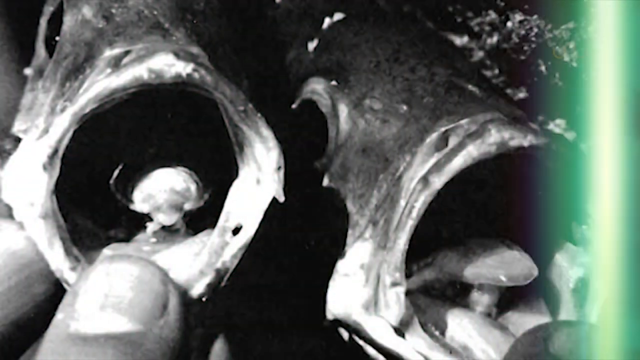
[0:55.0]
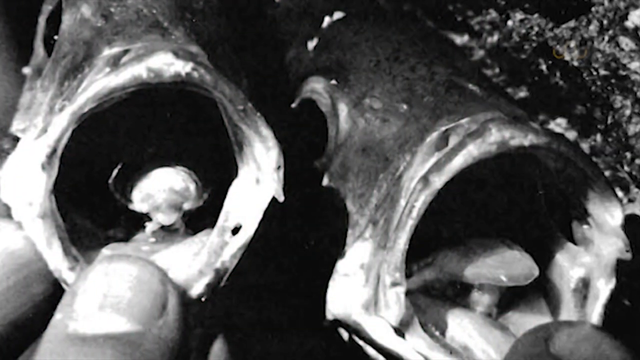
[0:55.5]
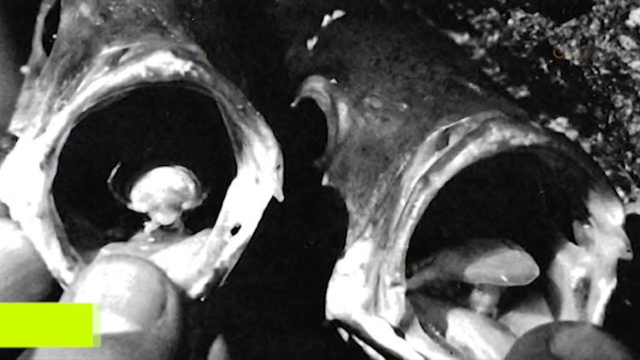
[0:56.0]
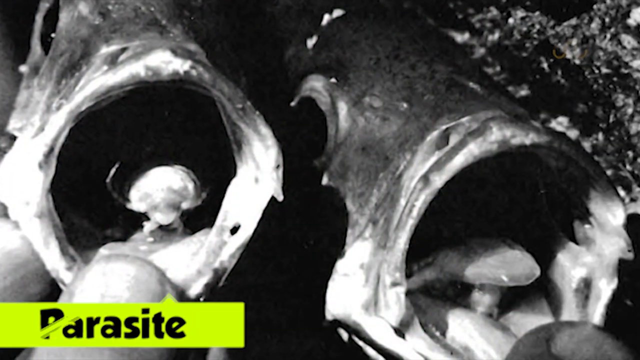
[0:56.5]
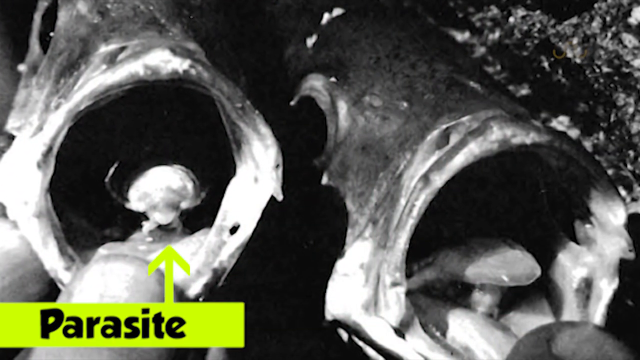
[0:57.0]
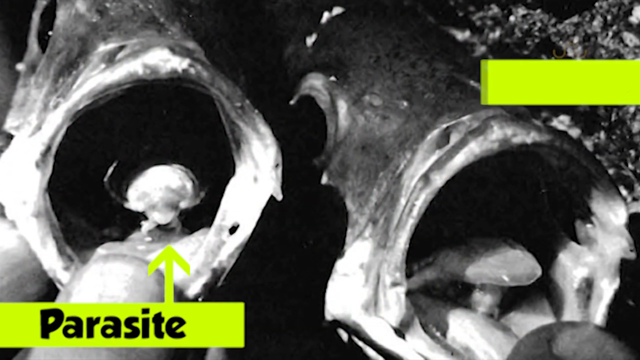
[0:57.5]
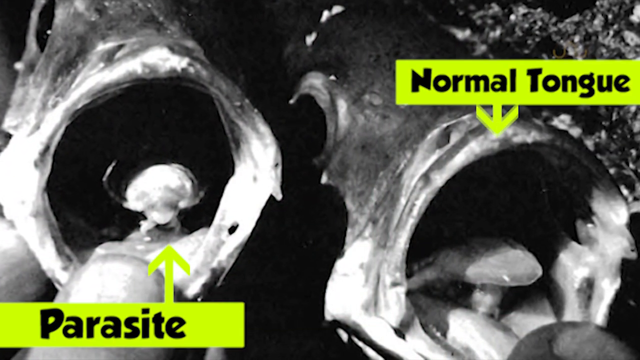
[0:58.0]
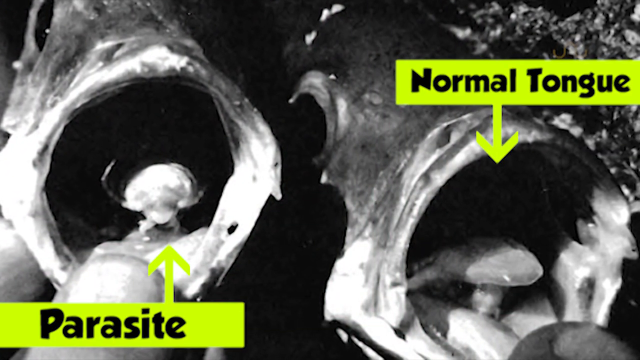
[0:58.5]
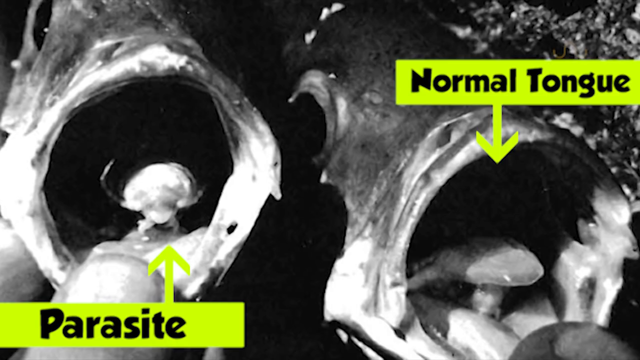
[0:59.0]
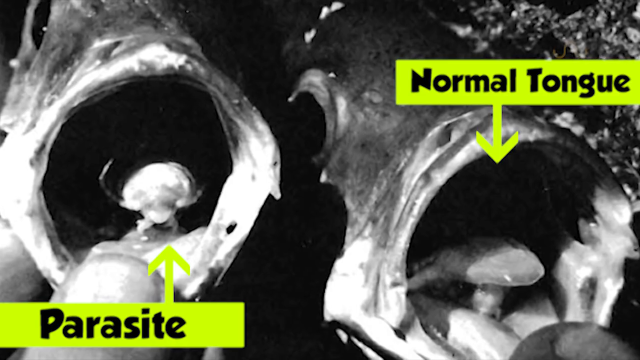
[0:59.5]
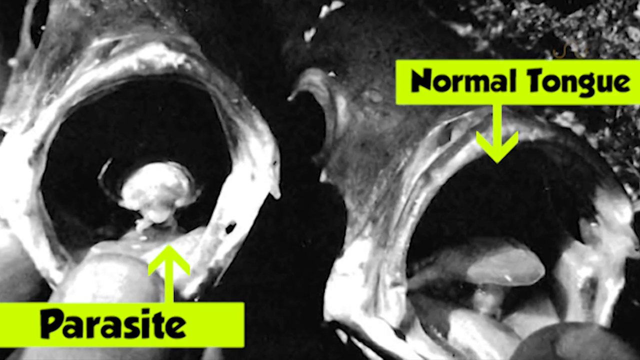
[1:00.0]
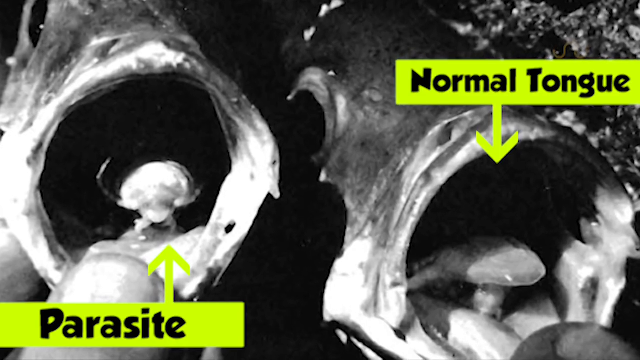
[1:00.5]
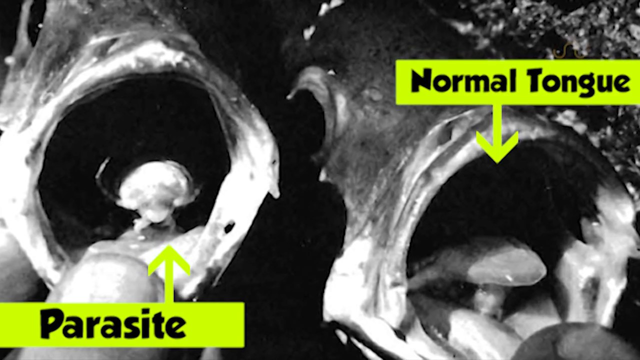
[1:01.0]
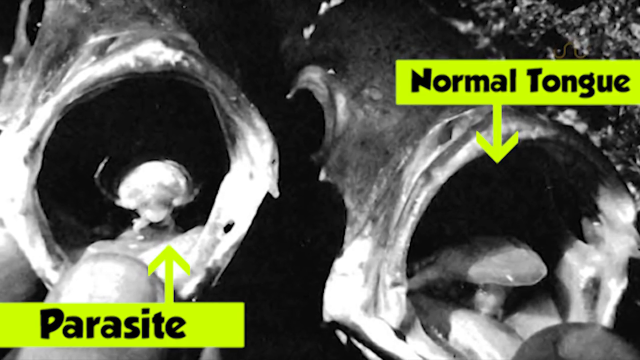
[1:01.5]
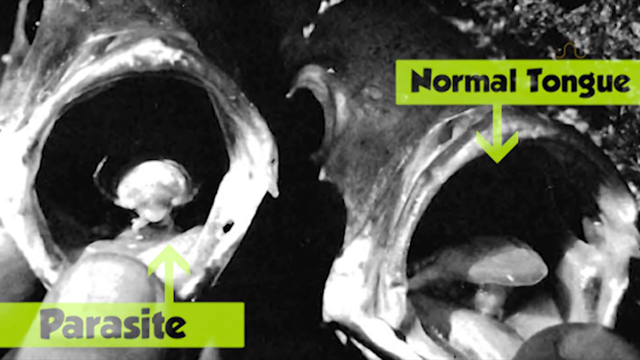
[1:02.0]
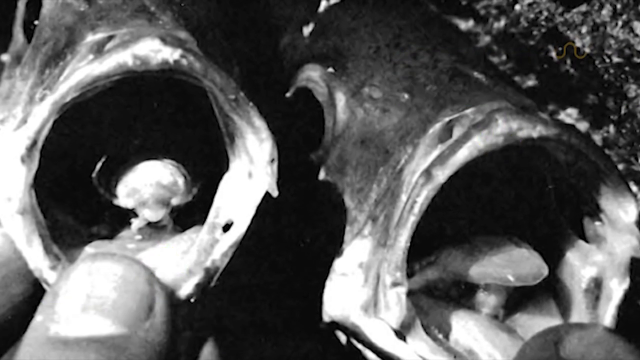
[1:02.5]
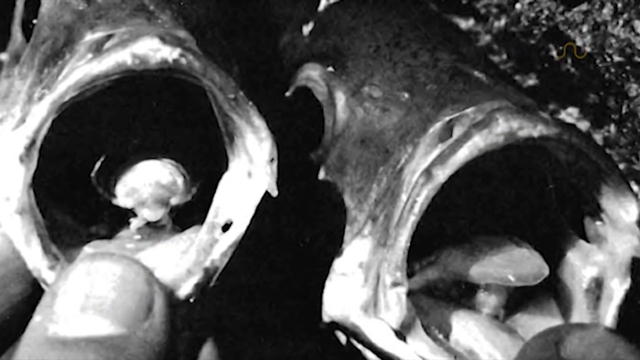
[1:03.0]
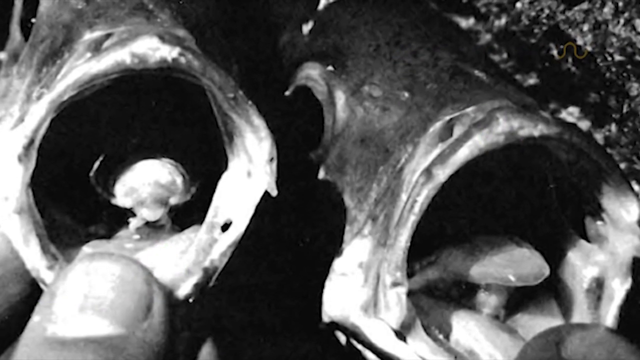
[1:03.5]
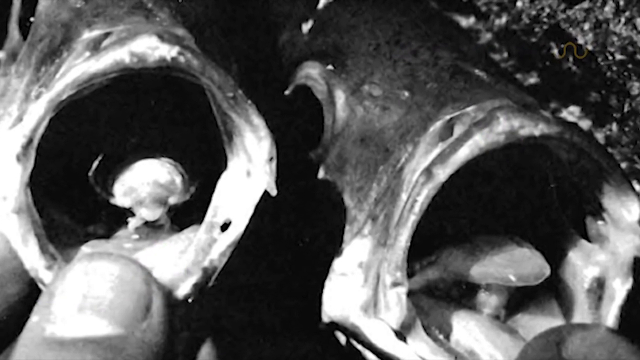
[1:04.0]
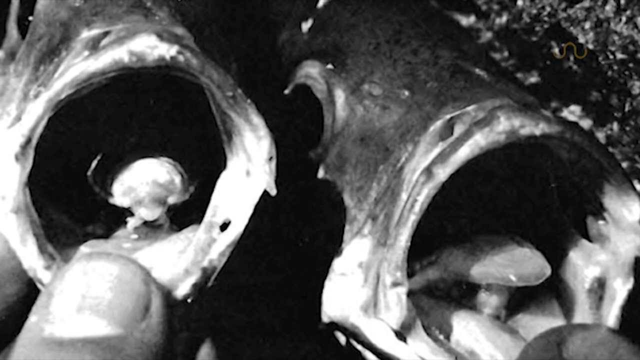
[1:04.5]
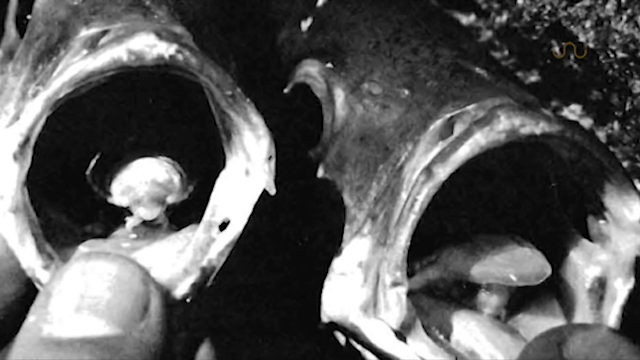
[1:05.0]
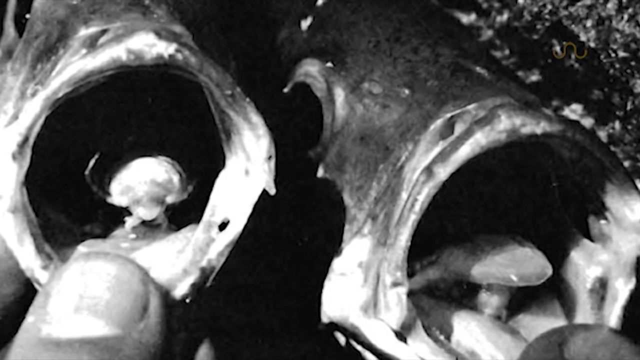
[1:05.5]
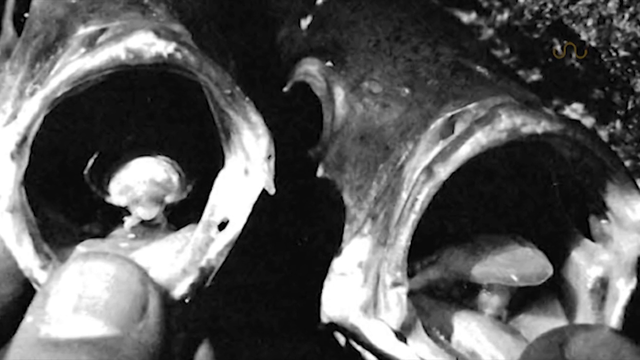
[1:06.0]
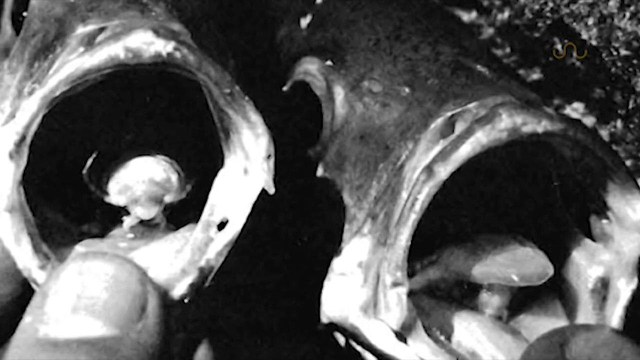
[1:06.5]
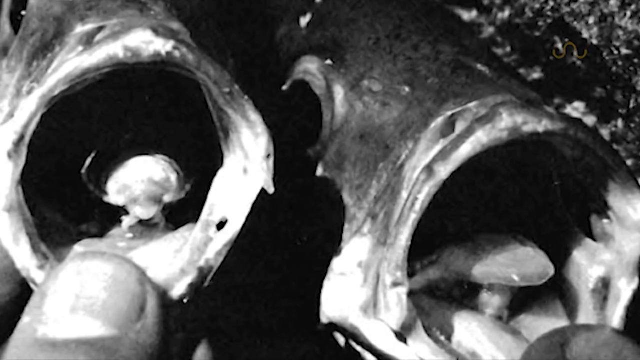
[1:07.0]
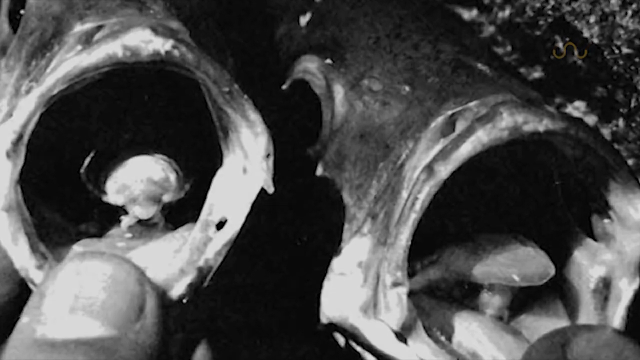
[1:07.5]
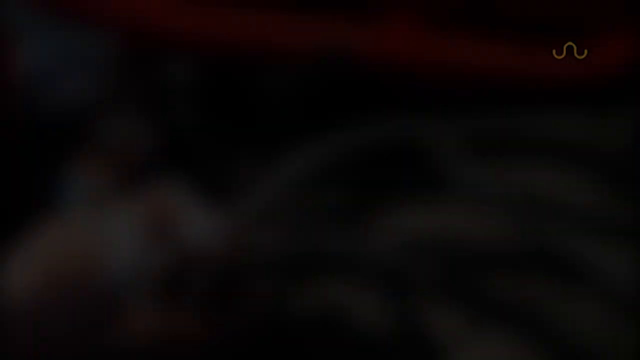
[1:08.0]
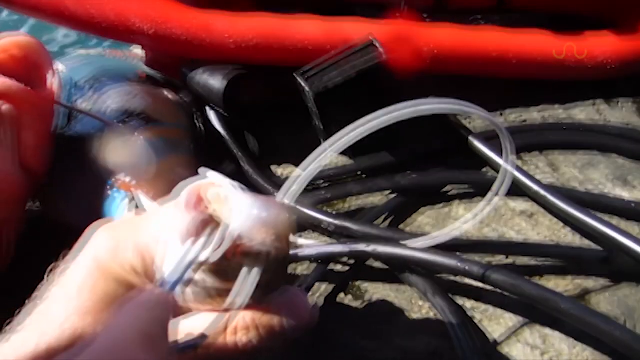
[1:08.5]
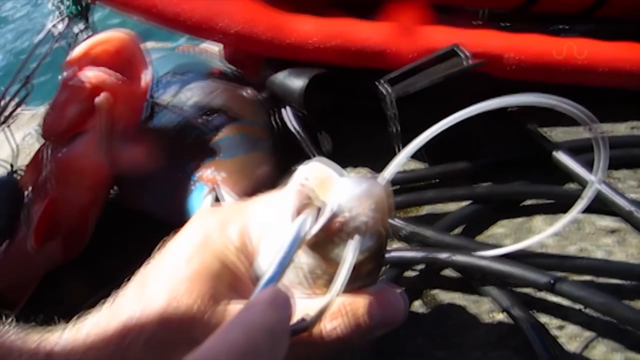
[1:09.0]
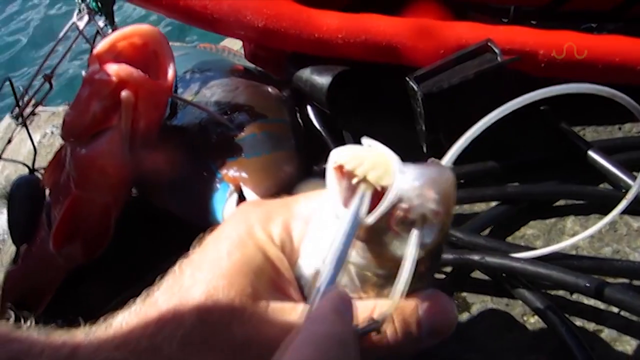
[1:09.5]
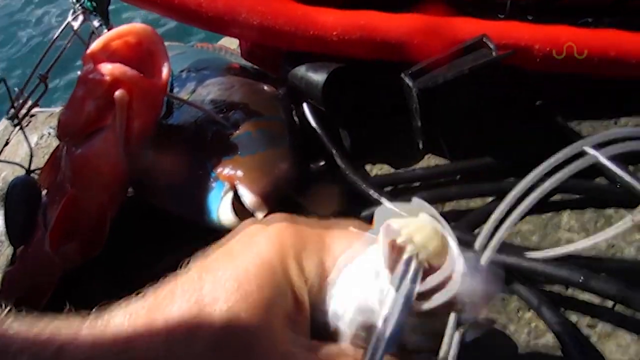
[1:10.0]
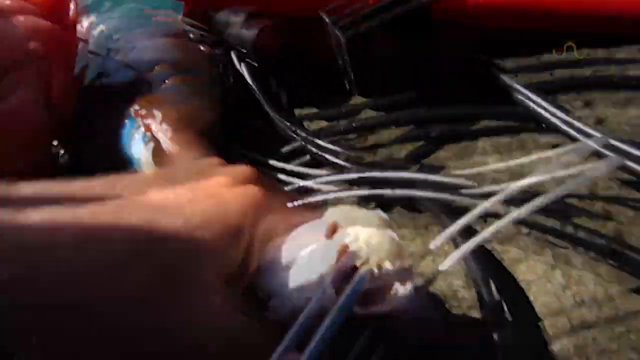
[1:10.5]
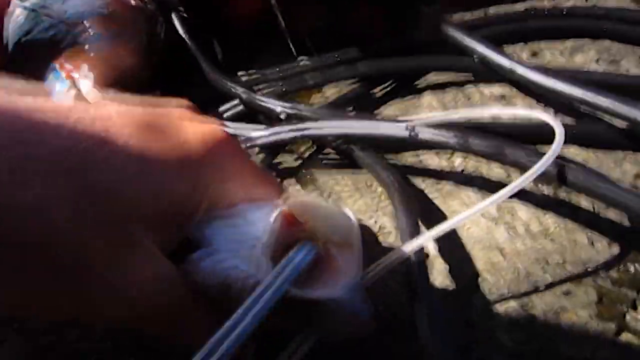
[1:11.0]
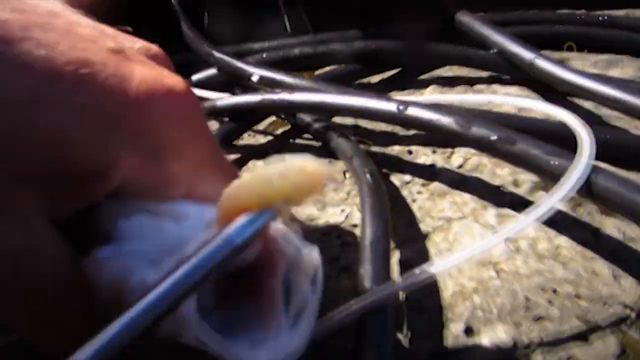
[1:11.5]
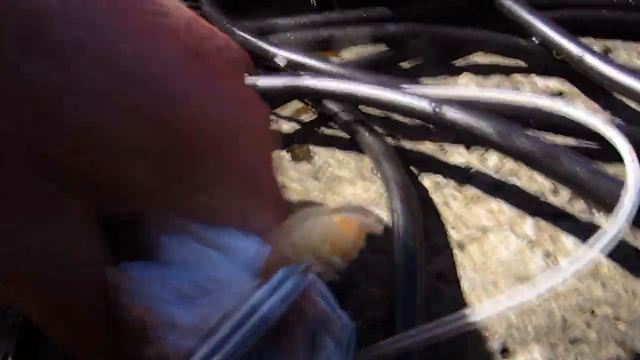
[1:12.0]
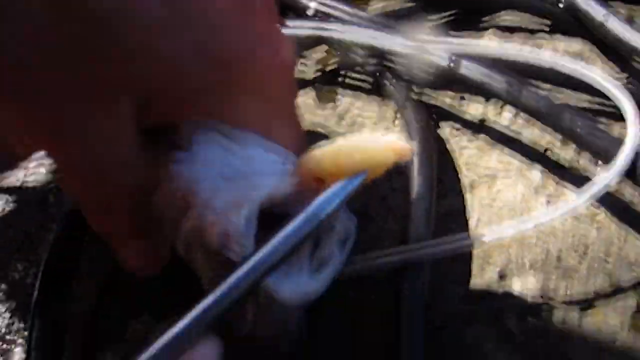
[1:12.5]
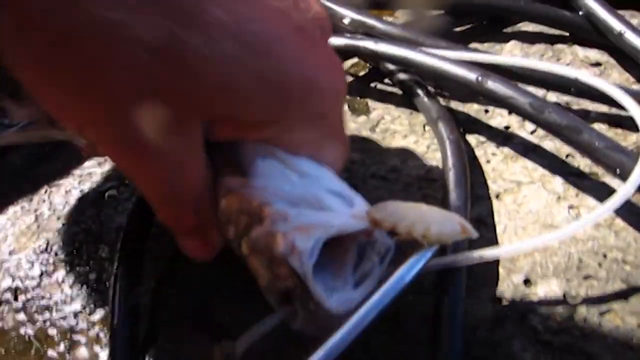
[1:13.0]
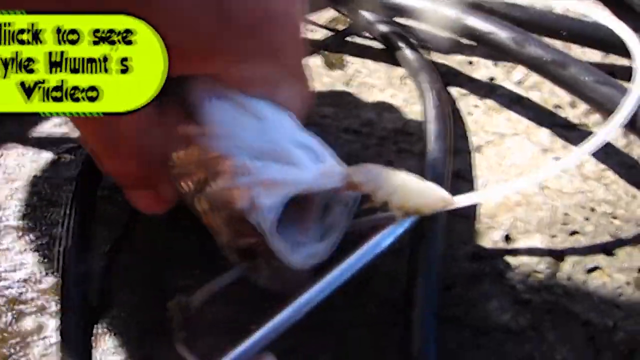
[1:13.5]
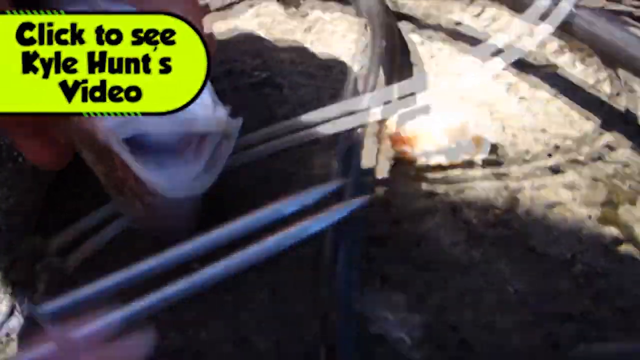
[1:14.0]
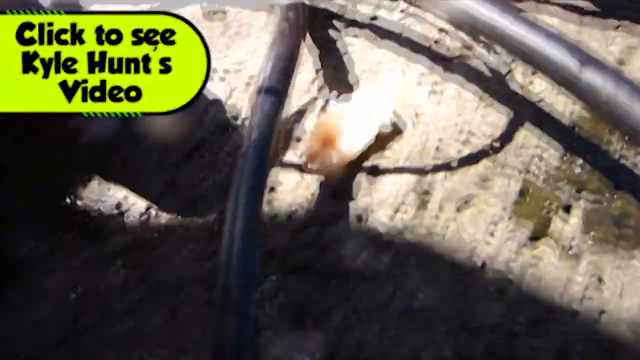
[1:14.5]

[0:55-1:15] Two fish are shown, one with a normal tongue and one with a parasite tongue. Labels reading "normal tongue" and "parasite tongue" appear in black letters on bright green boxes, with arrows pointing into the fish's mouths at the tongues. A fish that has been caught is then shown, and a fisherman scoops the parasite out of its mouth with a metal piece that looks like a screwdriver. The parasites look rather large when taken out of the fish's mouth; they are white and have replaced the fish's tongue.